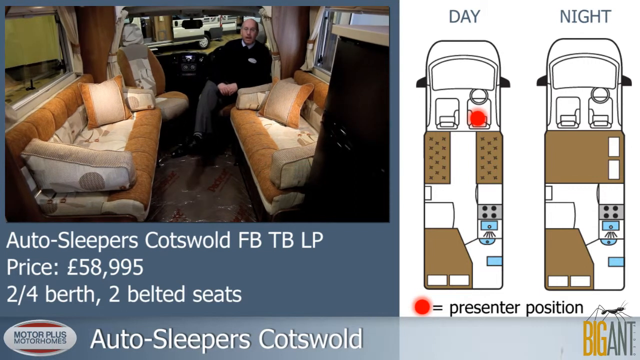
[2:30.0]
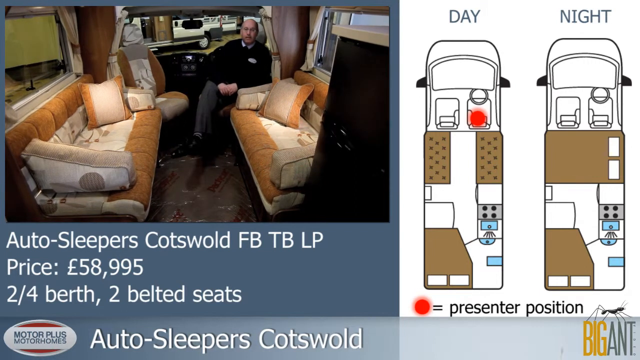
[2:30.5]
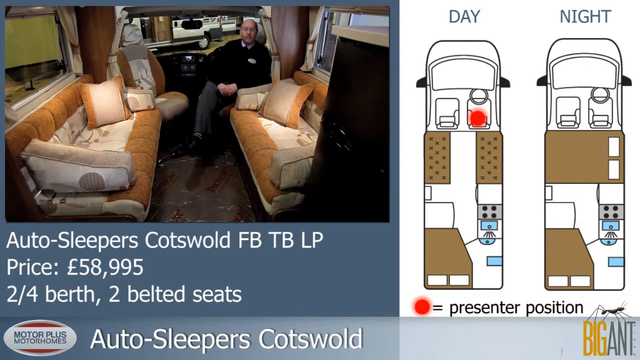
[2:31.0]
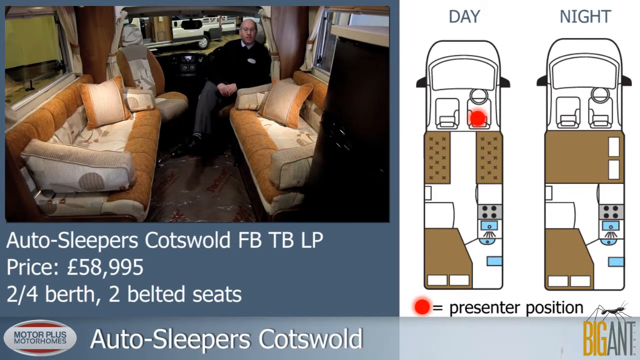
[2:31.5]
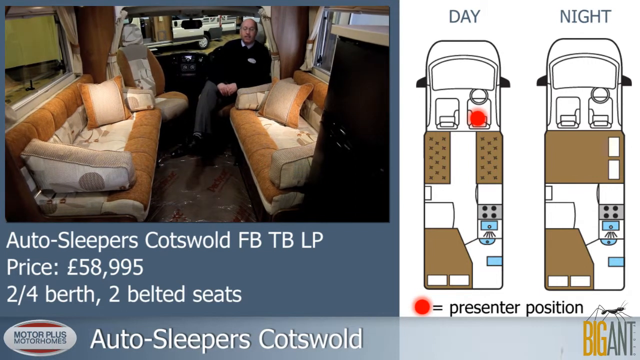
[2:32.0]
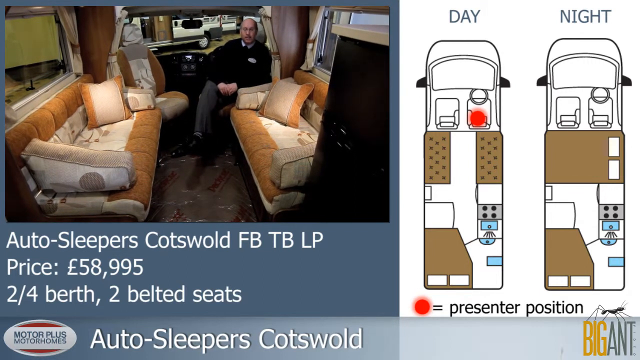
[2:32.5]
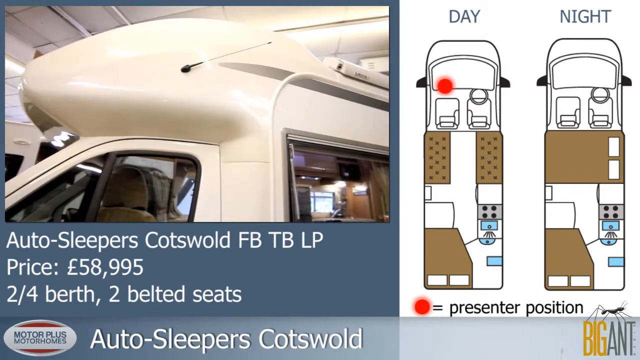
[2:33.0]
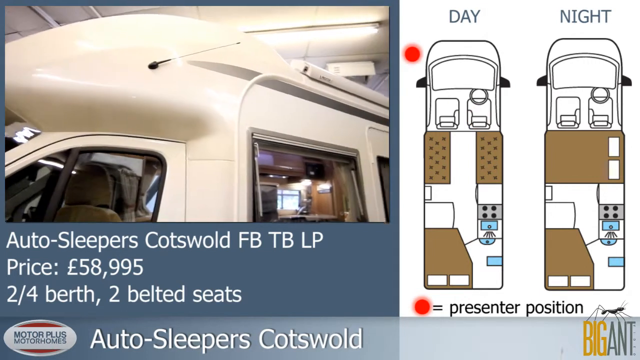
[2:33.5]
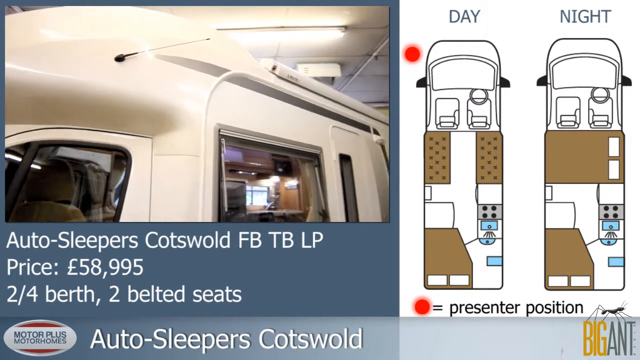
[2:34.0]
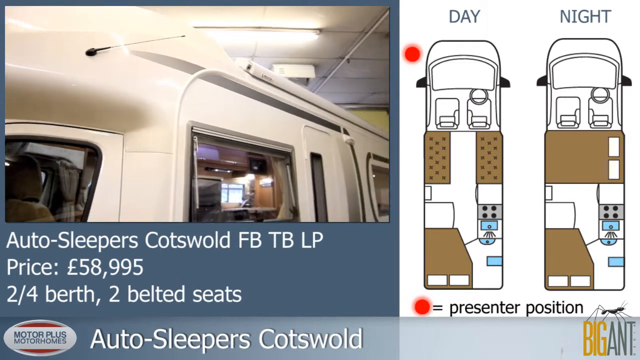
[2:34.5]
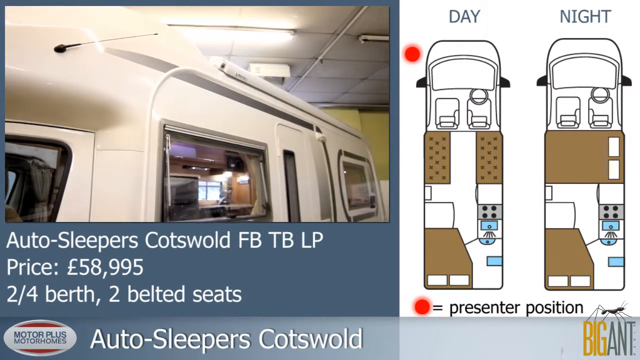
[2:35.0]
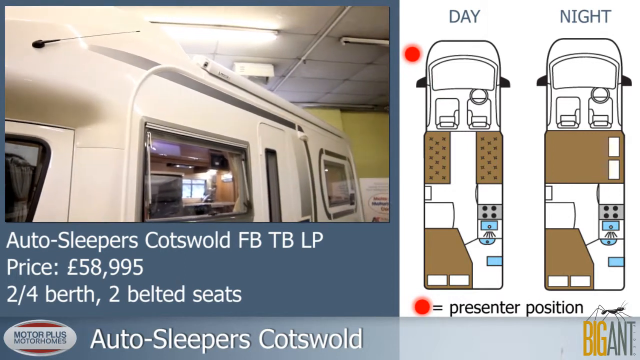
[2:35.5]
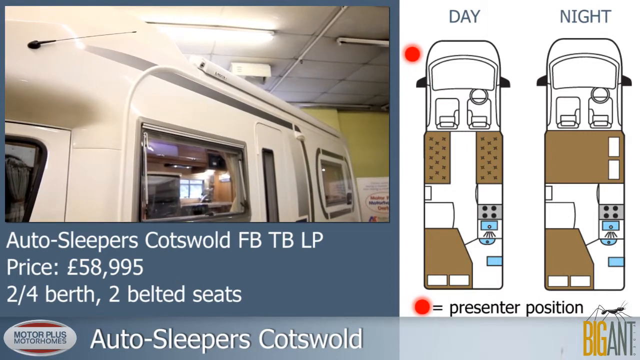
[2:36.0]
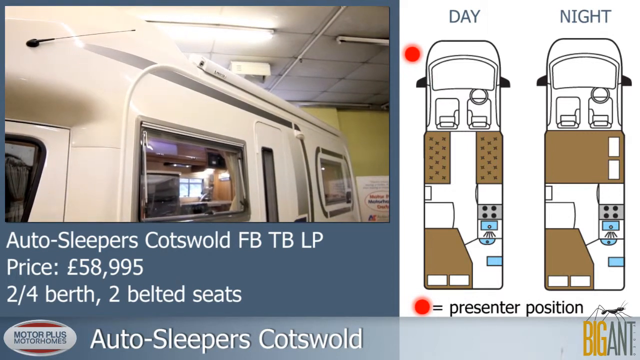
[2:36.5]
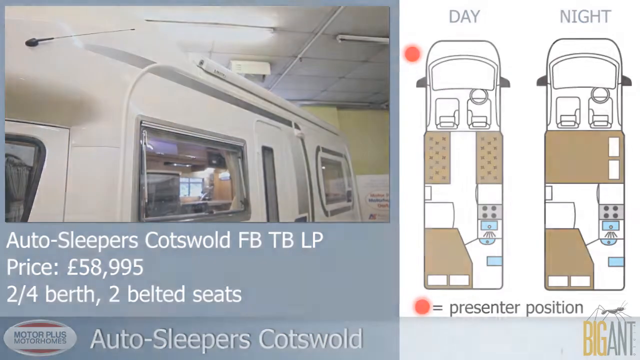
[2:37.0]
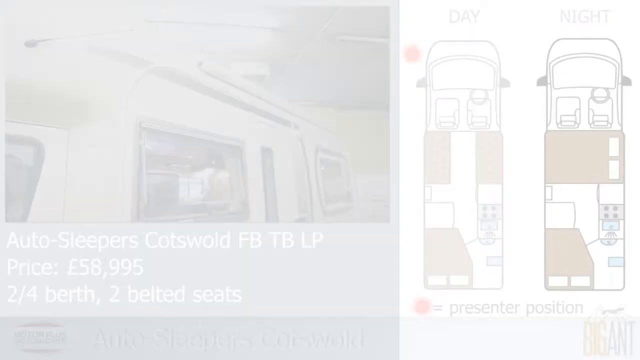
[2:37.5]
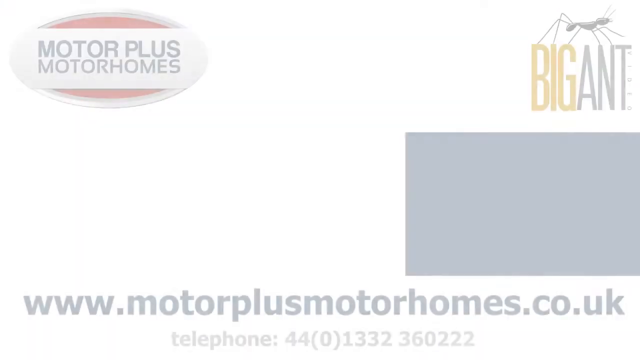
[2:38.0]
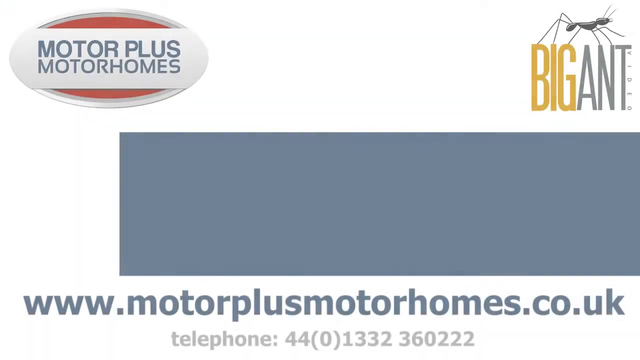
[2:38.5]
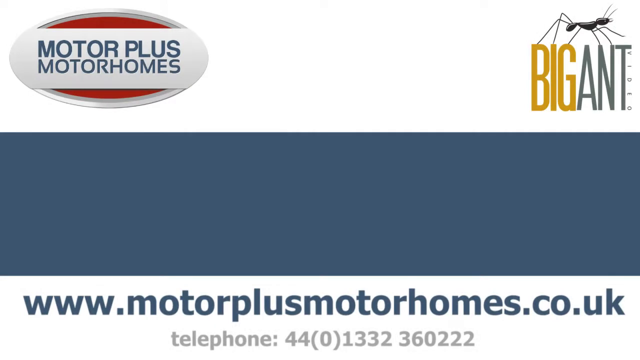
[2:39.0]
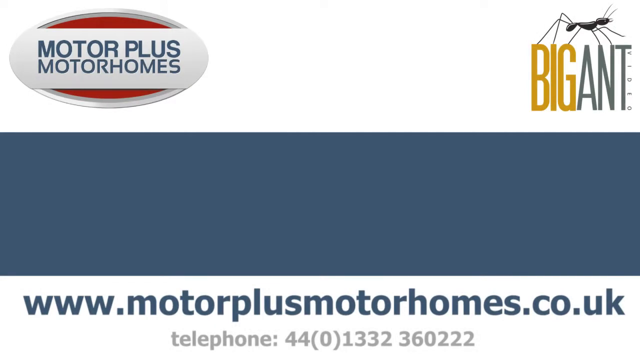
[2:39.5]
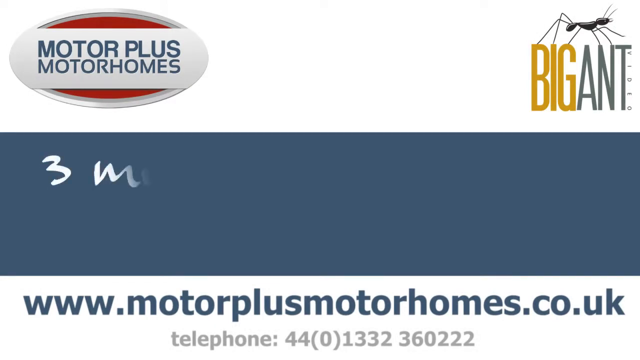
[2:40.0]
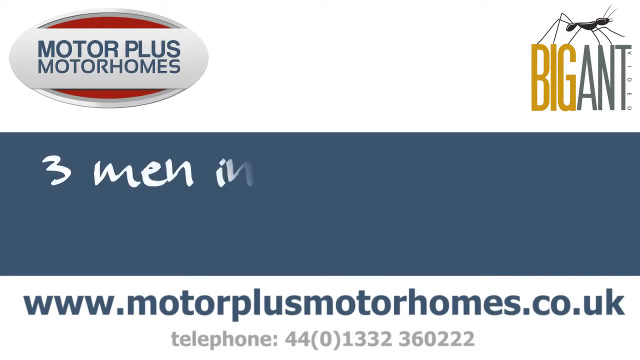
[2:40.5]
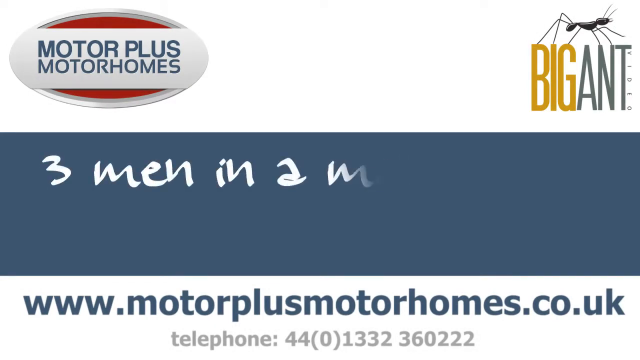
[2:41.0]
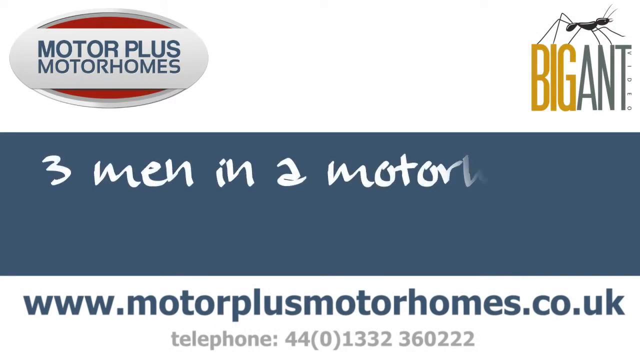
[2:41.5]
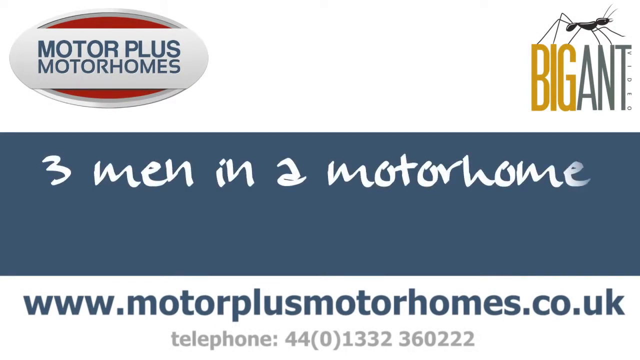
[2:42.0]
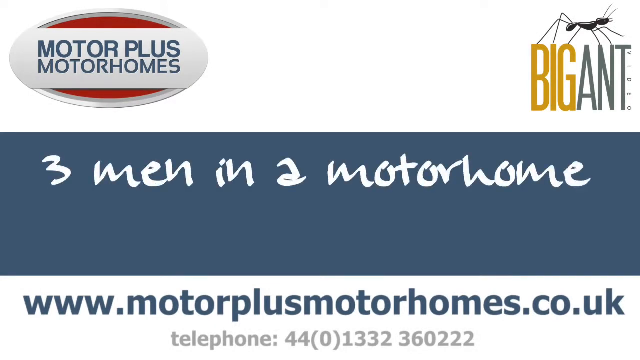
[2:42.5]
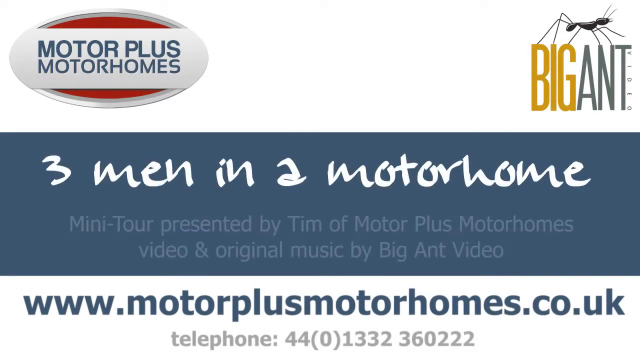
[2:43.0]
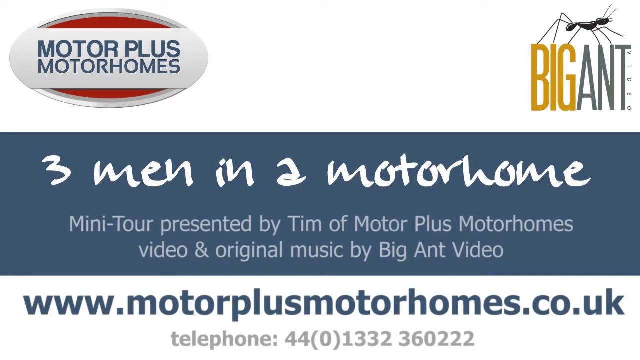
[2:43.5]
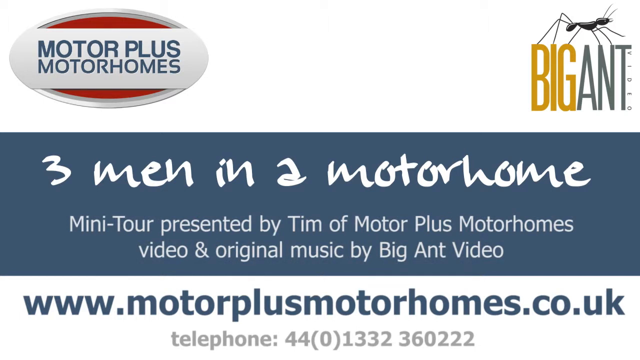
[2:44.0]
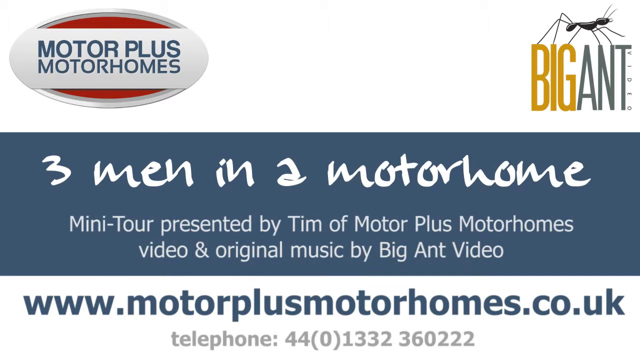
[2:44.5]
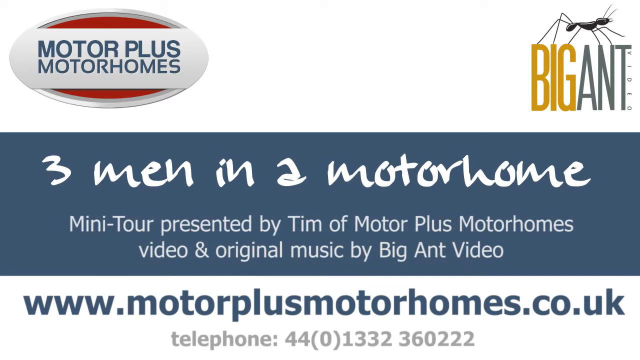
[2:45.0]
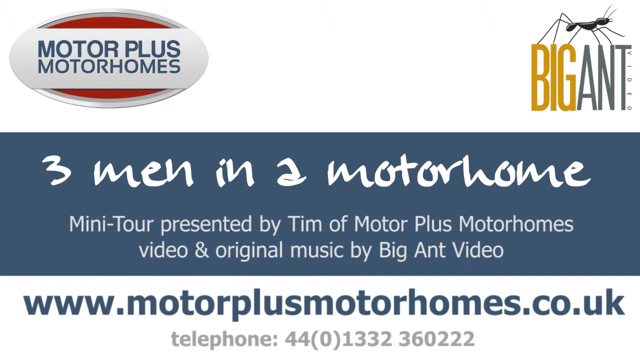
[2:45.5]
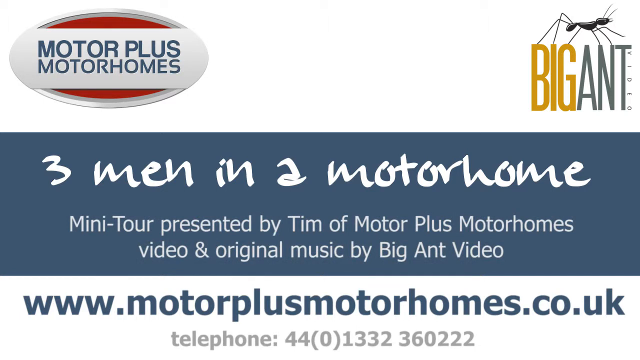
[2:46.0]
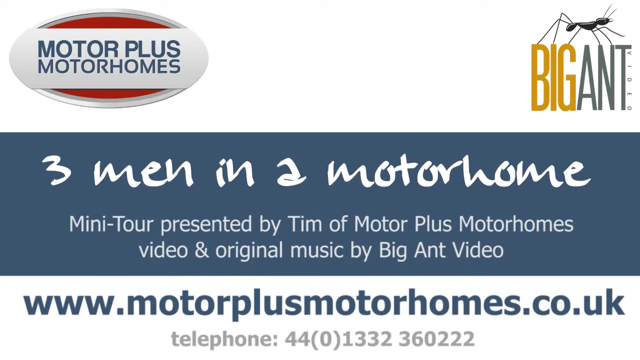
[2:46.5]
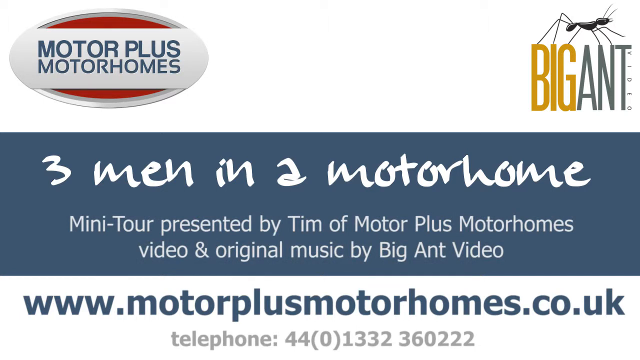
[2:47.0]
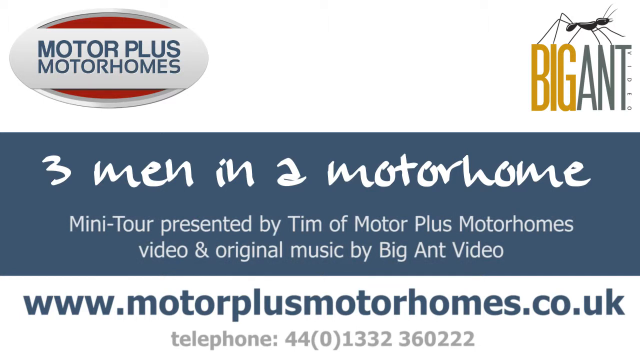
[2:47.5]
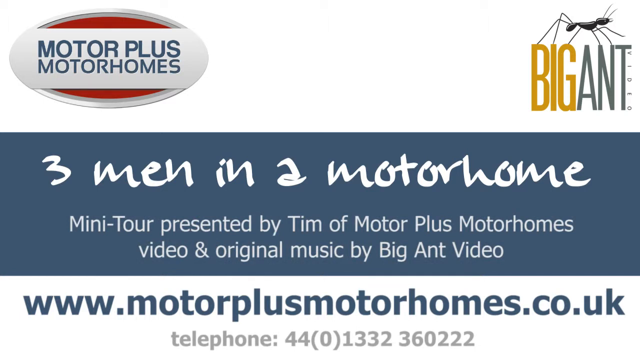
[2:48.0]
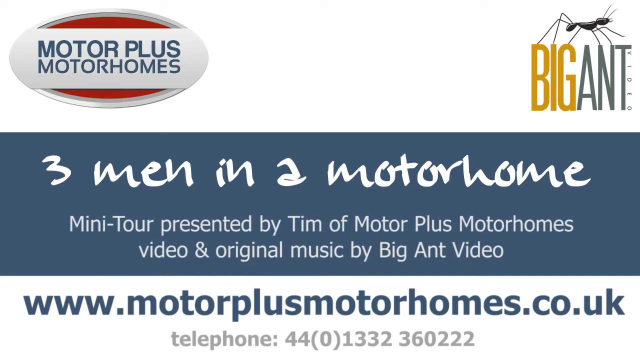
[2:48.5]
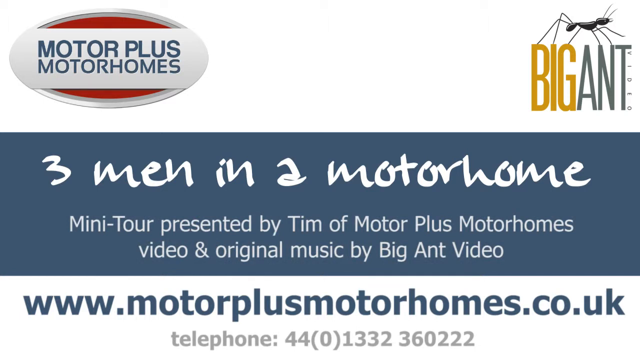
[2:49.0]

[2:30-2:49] The exterior of the 2-4 berth Autosleepers Cotswold, on sale for £58,995, is shown; it is an off-white colour and looks quite stylish. The video states that it is presented by three men in a motorhome, that the mini-tour was presented by Tim of the company Motorplus Motorhomes, and that the video and its original music were created by Big Ant Video. The address motorplushomes.co.uk and the phone number 01332 360 222 are provided.